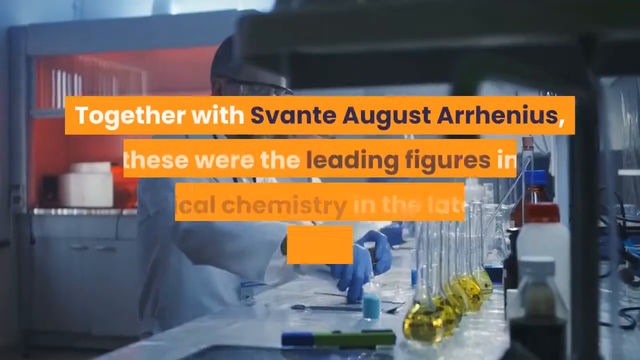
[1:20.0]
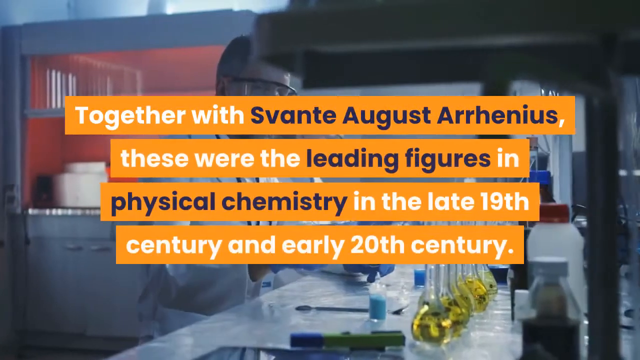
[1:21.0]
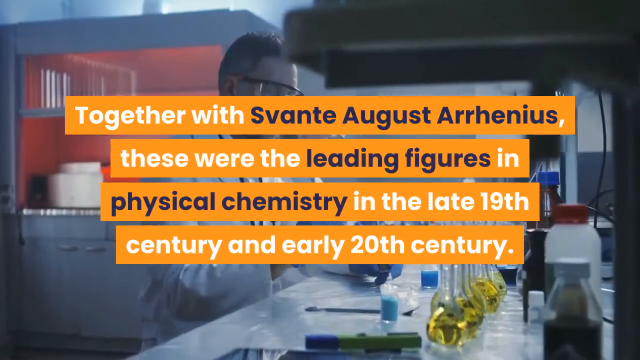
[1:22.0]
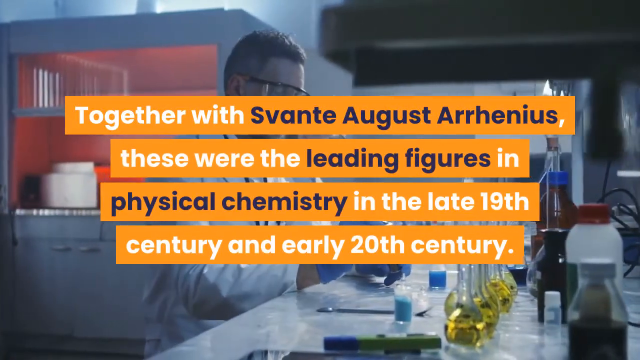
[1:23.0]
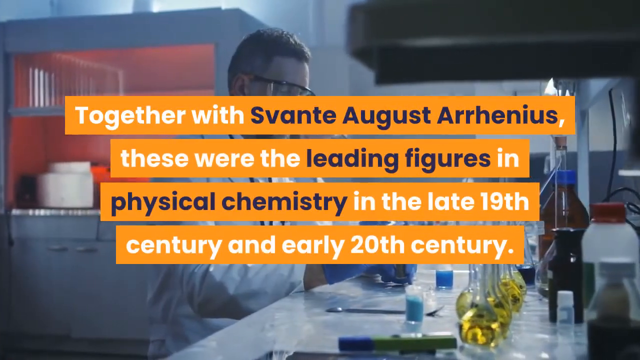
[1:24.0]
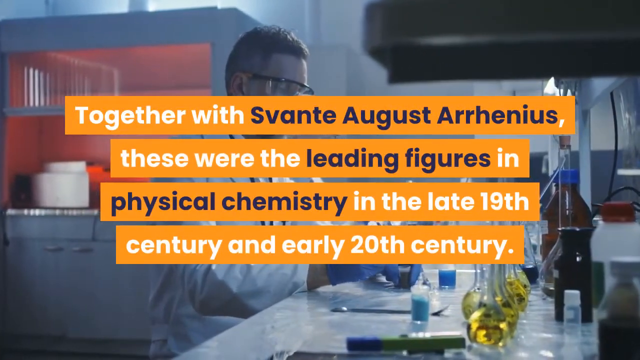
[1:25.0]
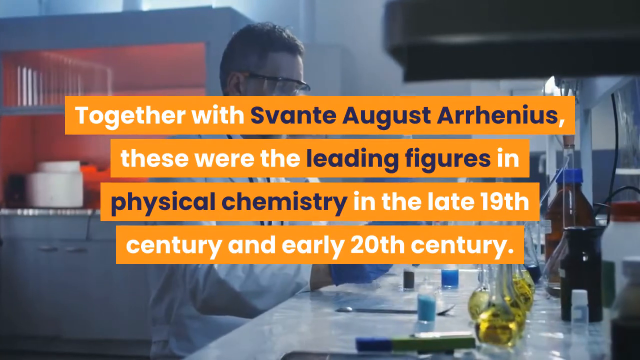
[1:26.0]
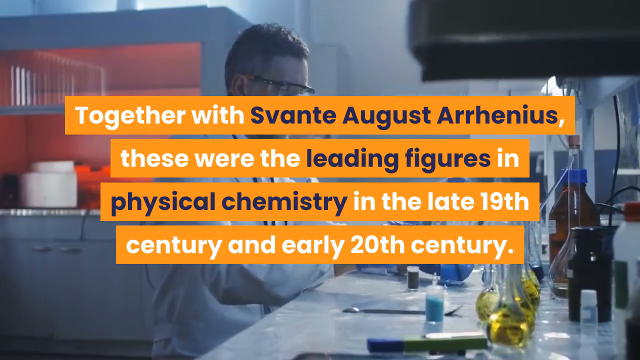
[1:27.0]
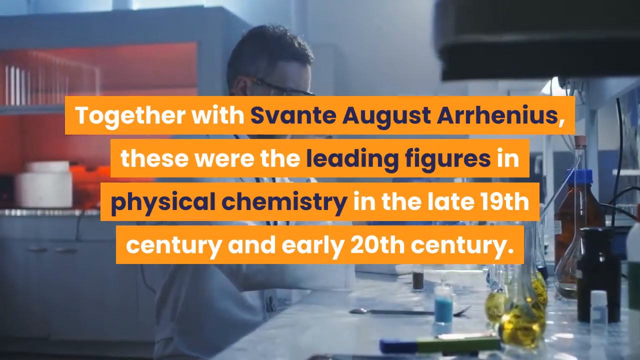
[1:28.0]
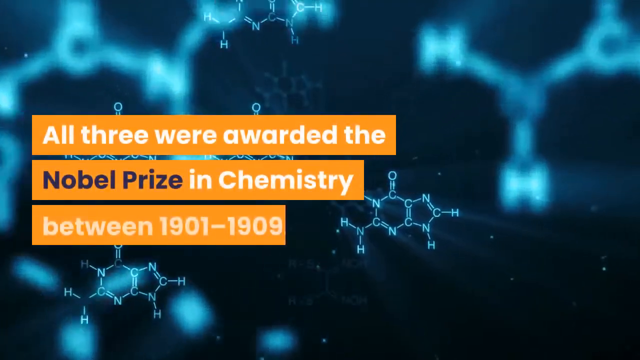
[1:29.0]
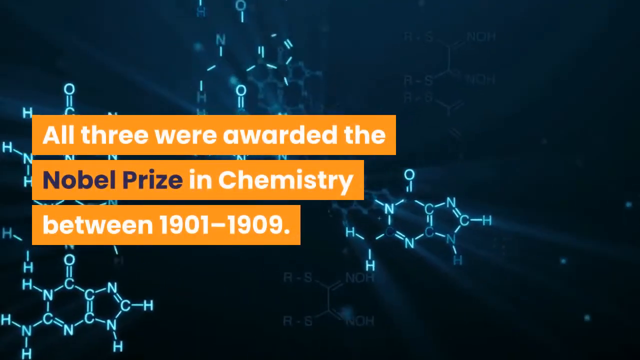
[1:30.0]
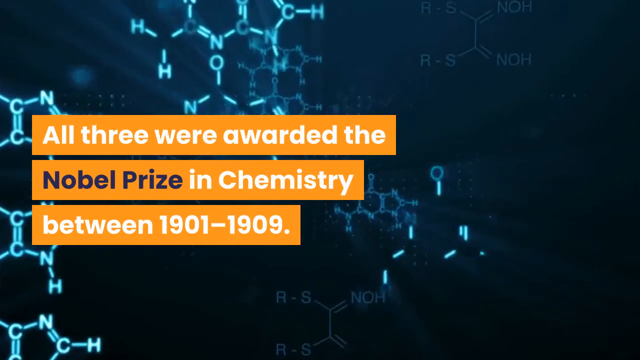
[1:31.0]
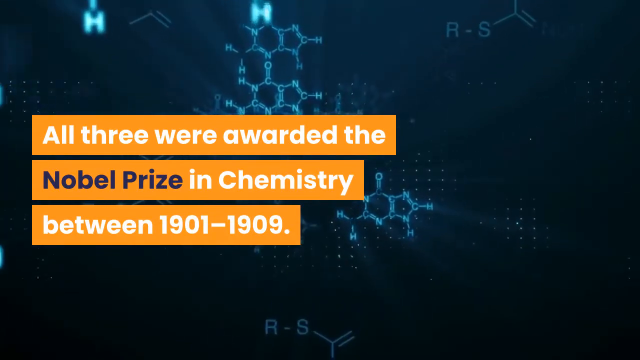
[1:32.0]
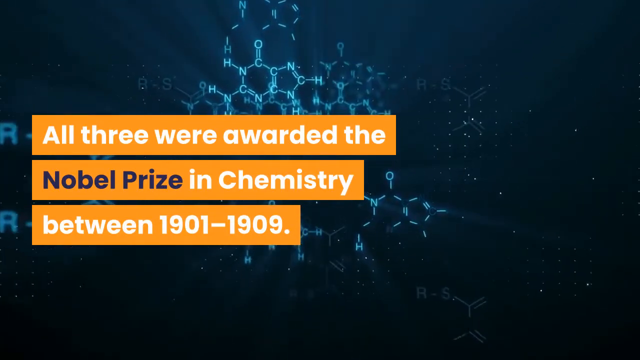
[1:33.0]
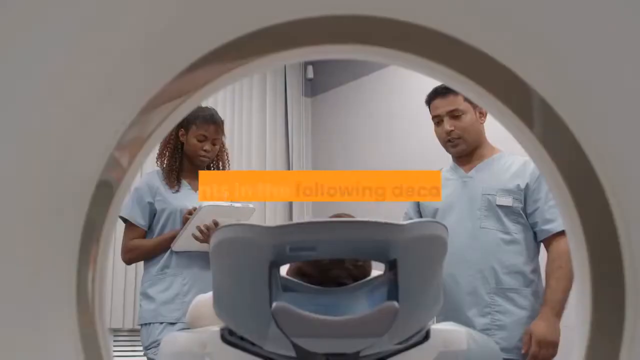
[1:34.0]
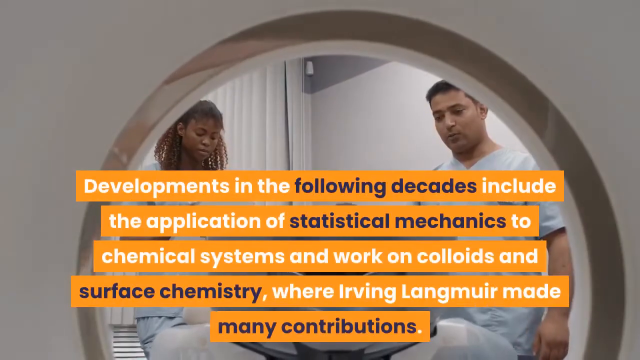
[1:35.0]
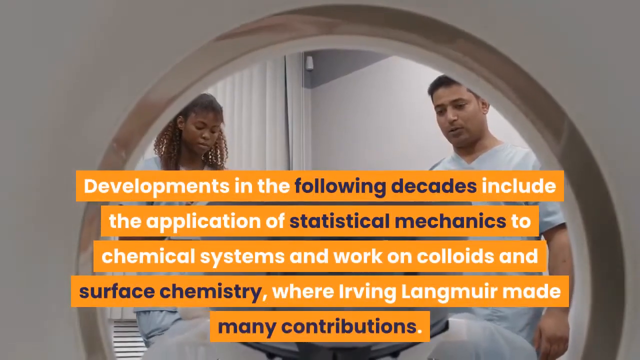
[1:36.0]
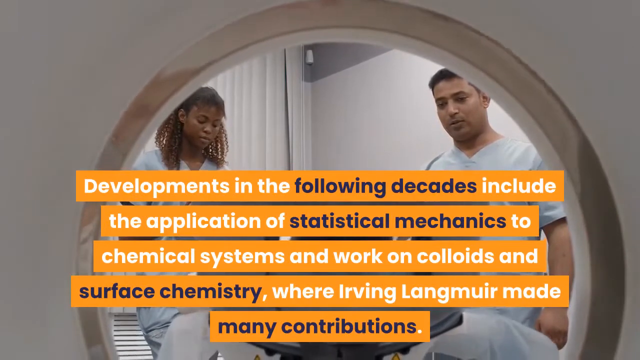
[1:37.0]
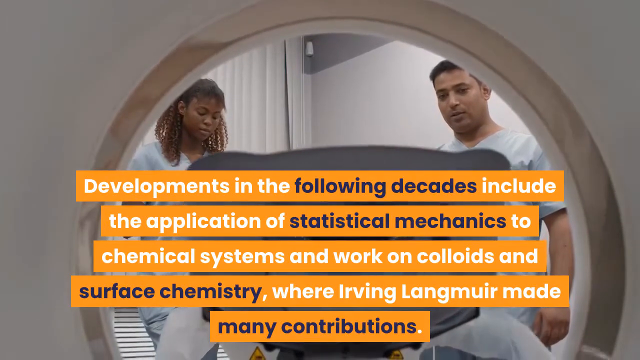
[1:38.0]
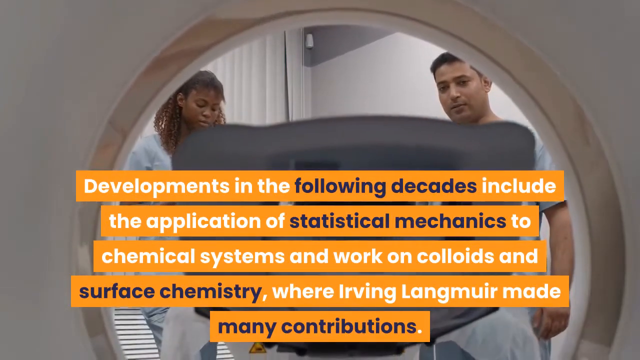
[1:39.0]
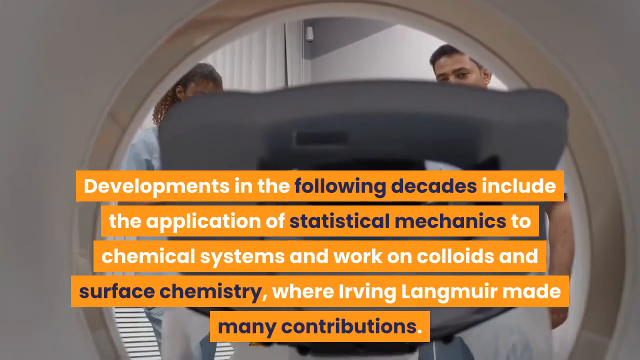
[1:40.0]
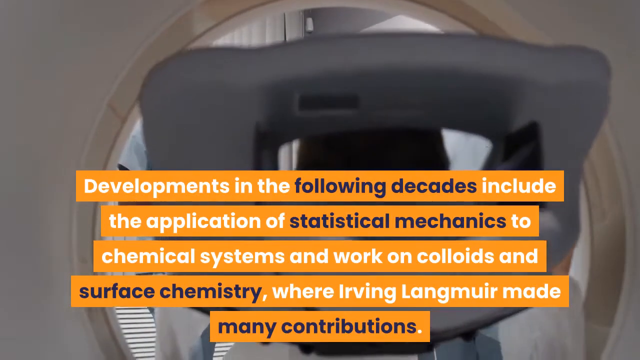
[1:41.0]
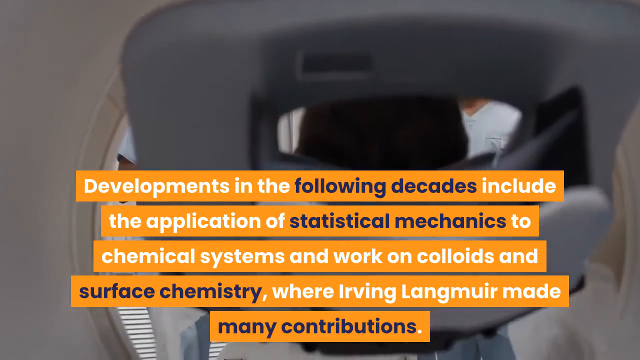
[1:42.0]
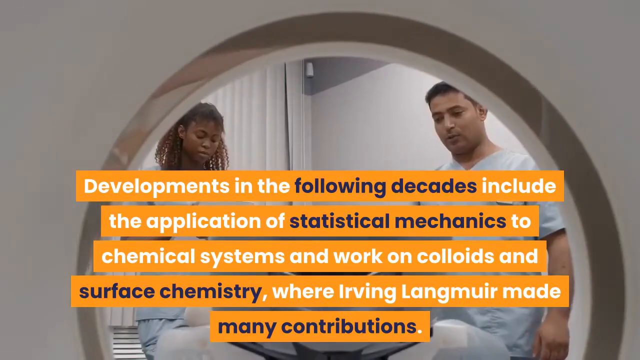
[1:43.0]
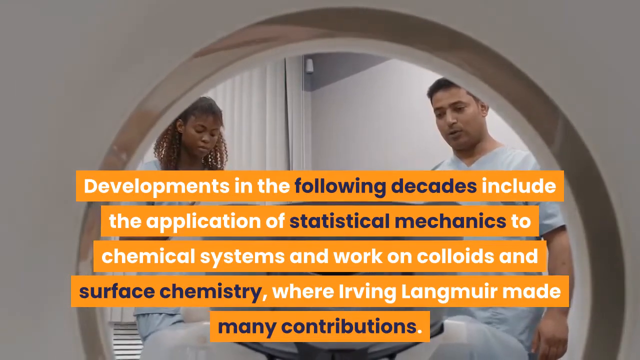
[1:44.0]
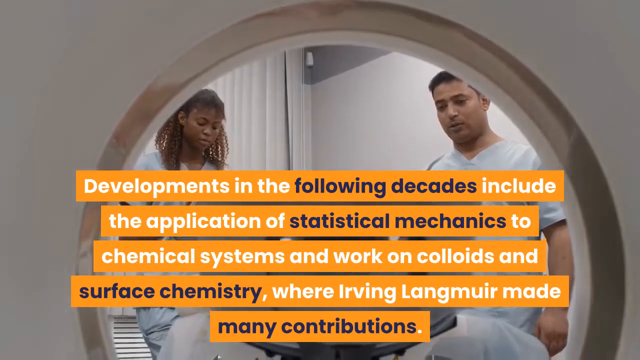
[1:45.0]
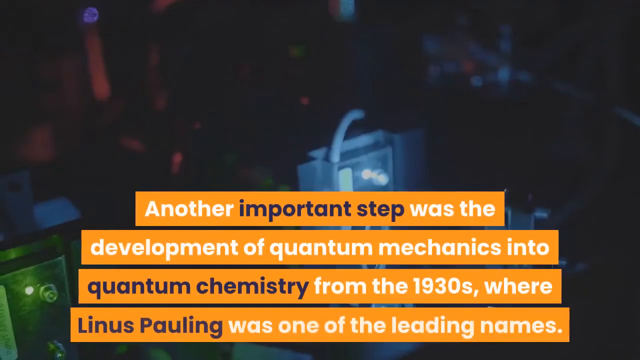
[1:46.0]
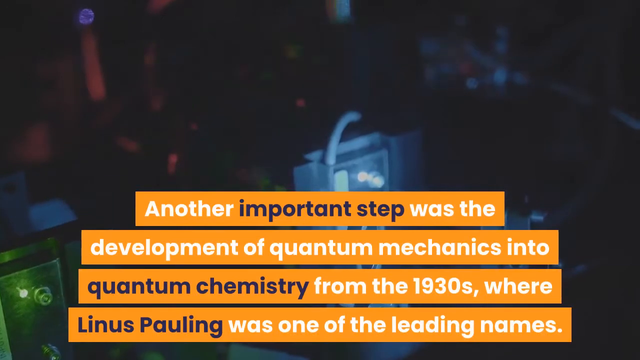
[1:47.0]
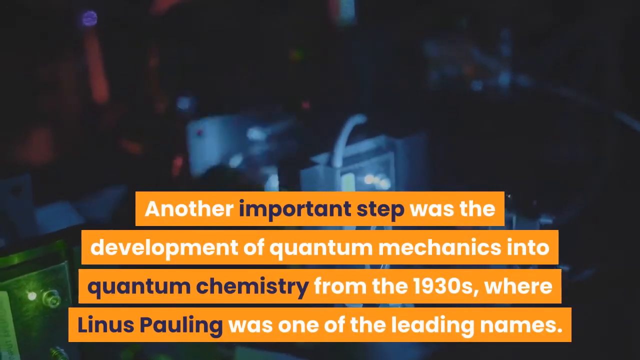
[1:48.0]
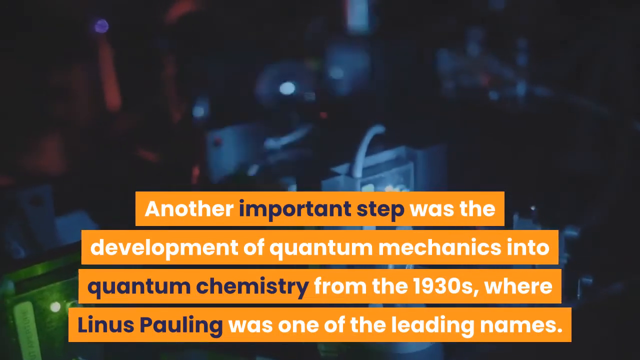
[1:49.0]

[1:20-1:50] Another scientist works inside a lab. Text on top of the footage says that Svante August Arrhenius was also a leading figure in physical chemistry in the late 19th century and early 20th century. An animation of different molecule structures follows, with text on top saying the three men were awarded the Nobel Prize in Chemistry between 1901 and 1909. The molecules glow and change while fading away as more molecules appear. The next caption describes developments in statistical mechanics and surface chemistry in the following decades. A picture shows the inside of a lab with a piece of equipment in front of it, which possibly seems to be an MRI machine.